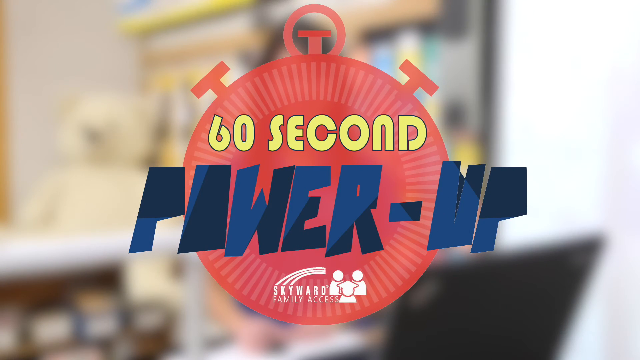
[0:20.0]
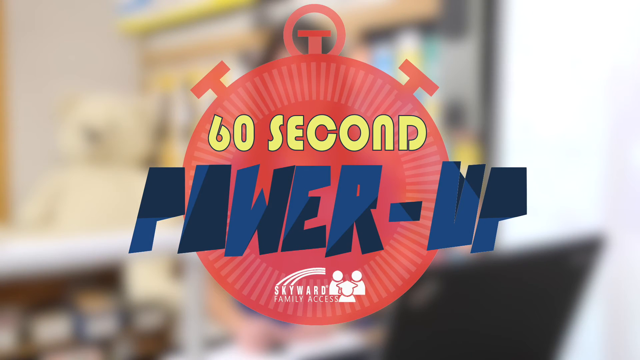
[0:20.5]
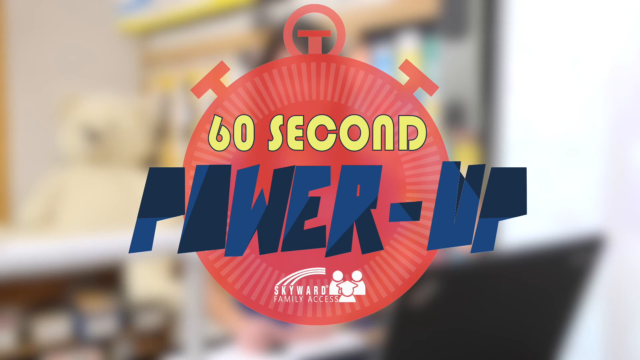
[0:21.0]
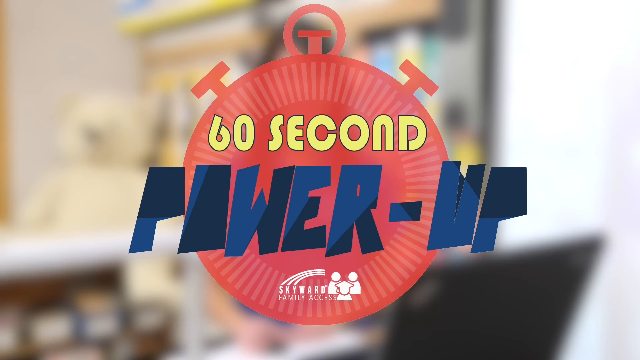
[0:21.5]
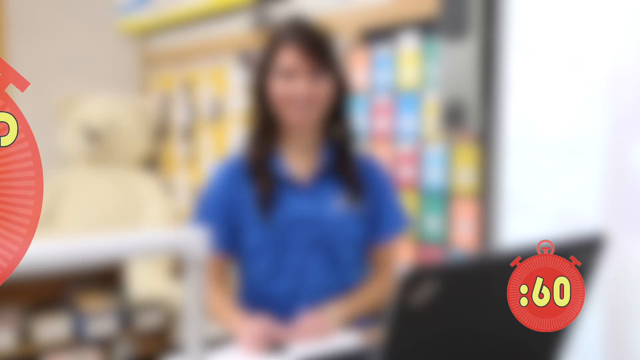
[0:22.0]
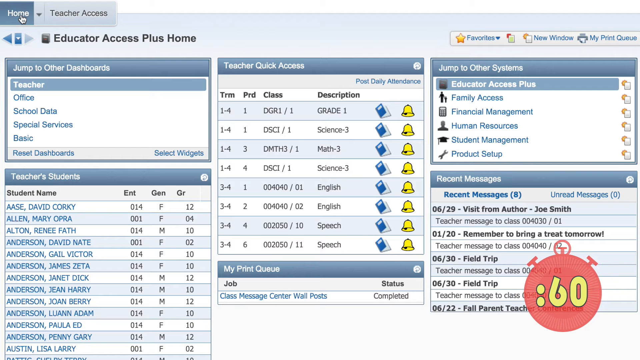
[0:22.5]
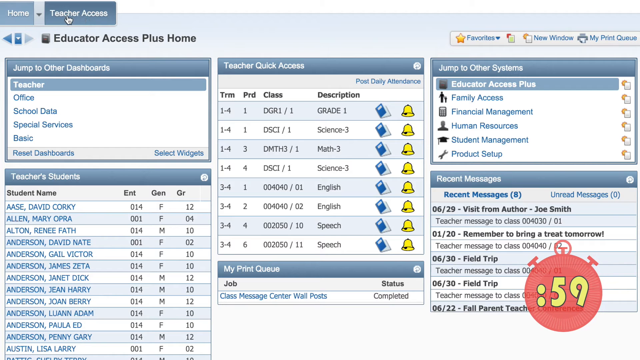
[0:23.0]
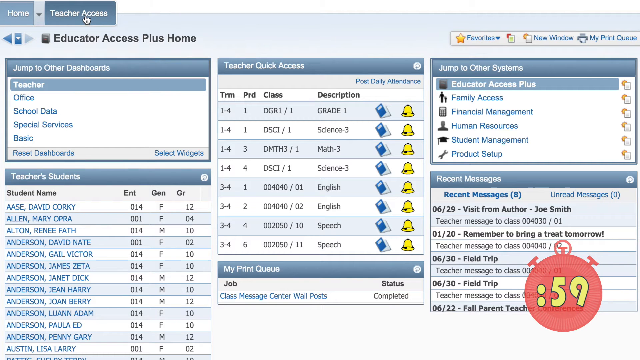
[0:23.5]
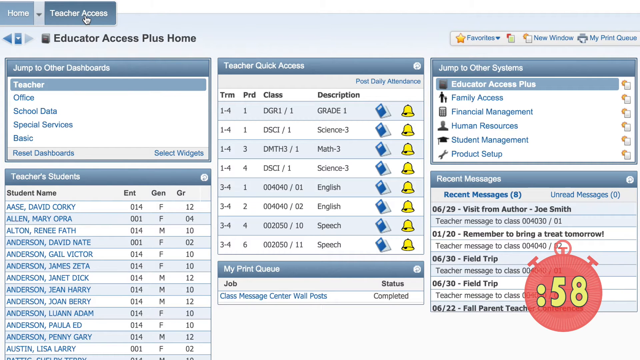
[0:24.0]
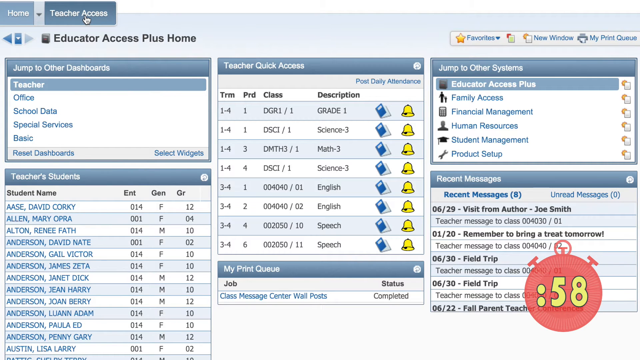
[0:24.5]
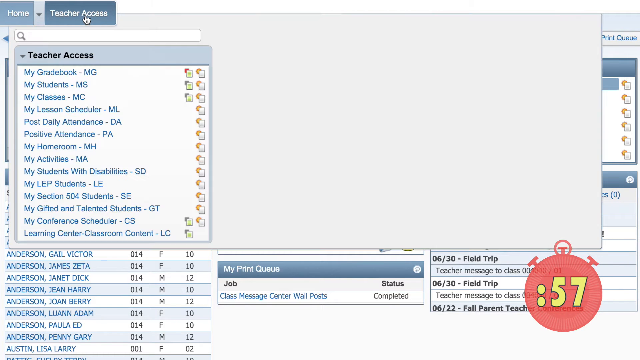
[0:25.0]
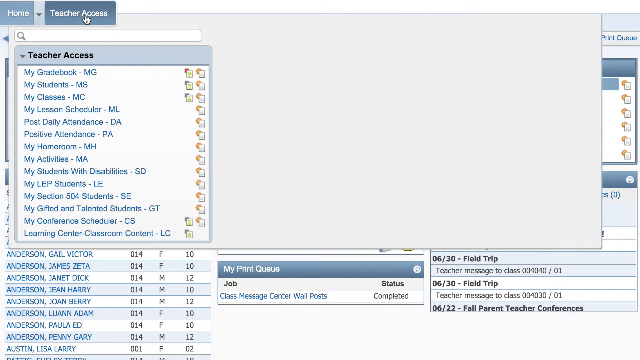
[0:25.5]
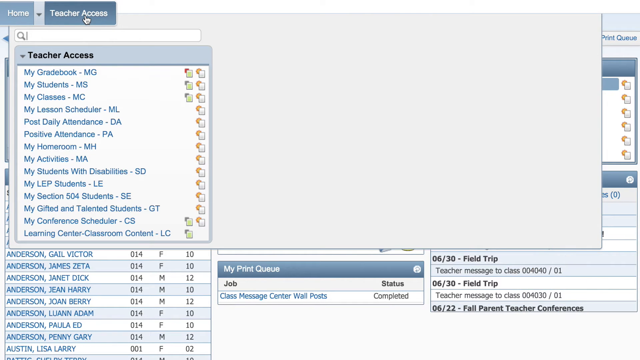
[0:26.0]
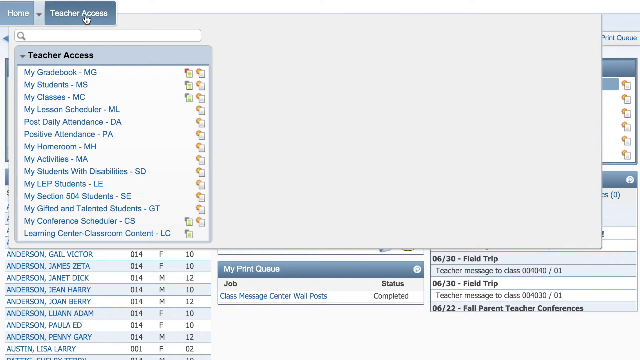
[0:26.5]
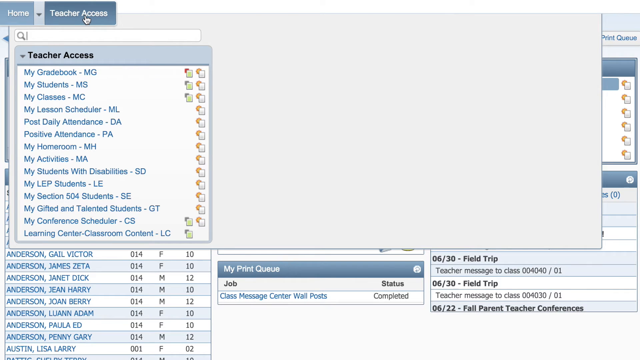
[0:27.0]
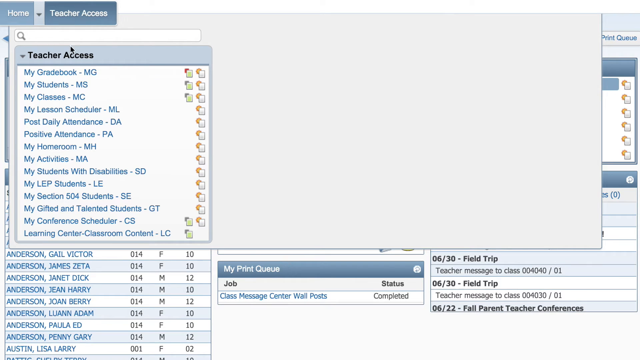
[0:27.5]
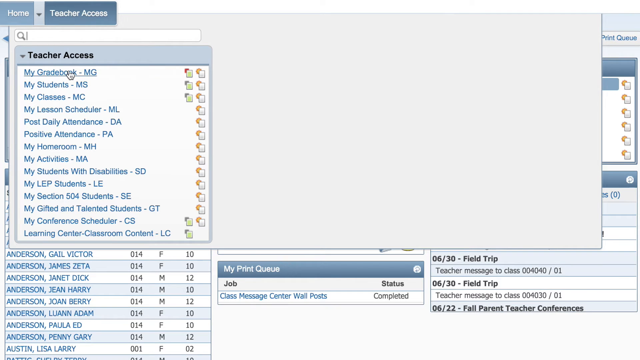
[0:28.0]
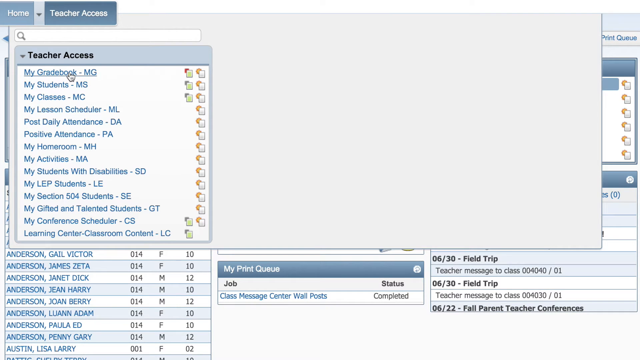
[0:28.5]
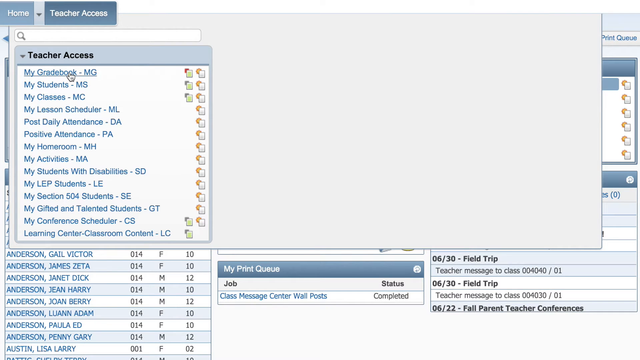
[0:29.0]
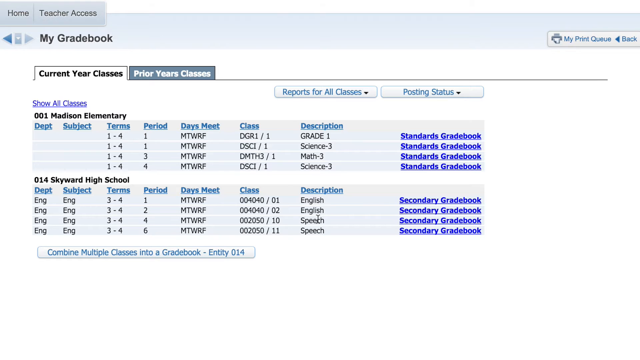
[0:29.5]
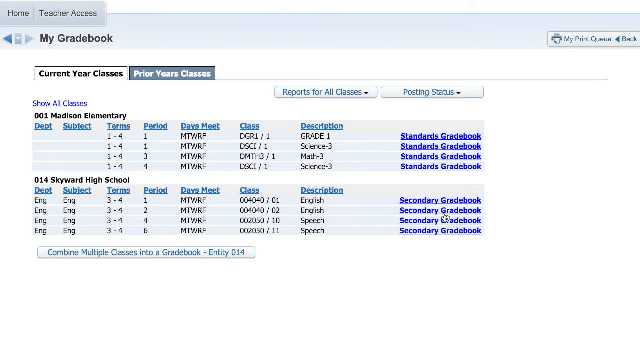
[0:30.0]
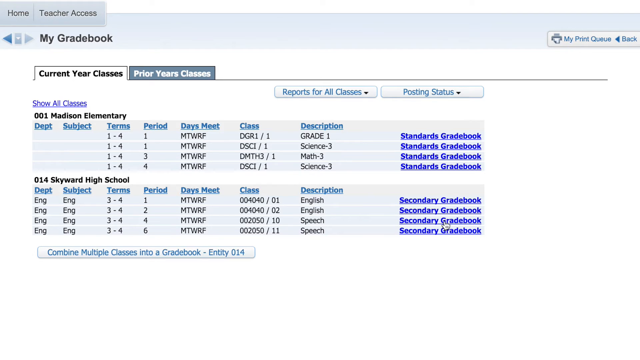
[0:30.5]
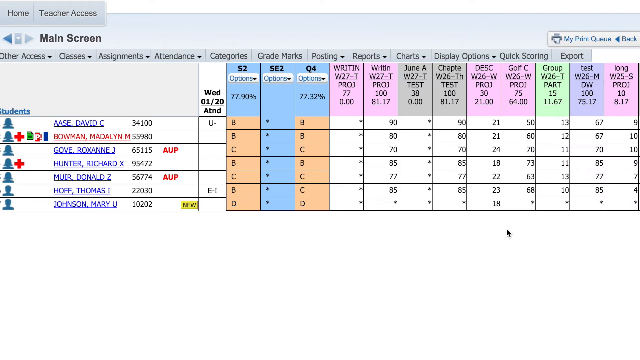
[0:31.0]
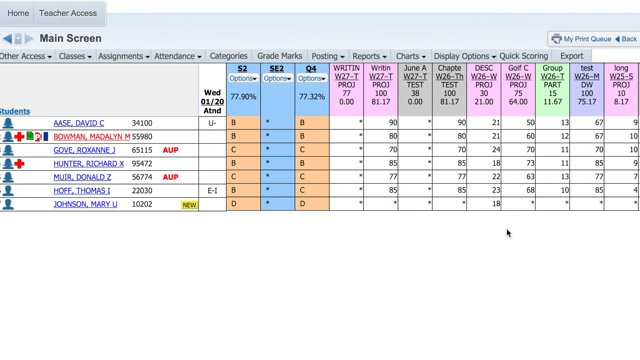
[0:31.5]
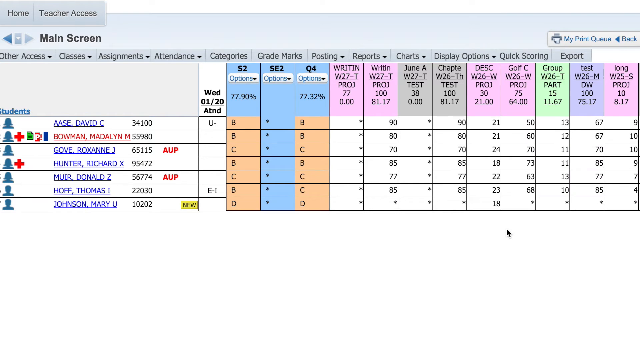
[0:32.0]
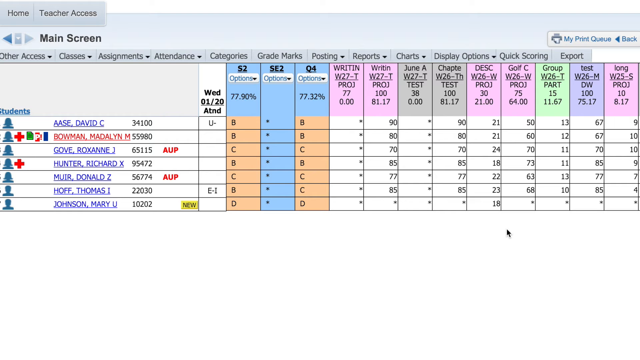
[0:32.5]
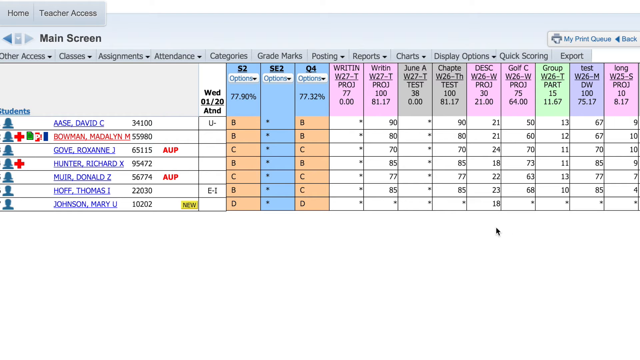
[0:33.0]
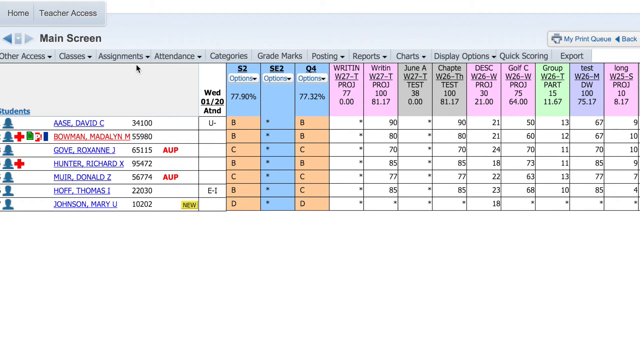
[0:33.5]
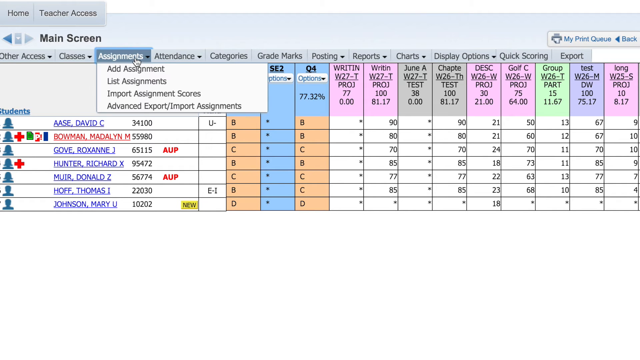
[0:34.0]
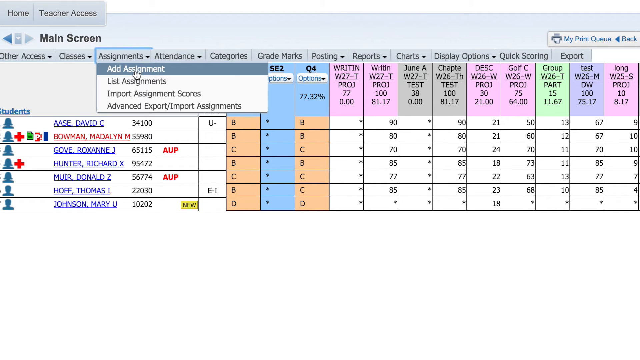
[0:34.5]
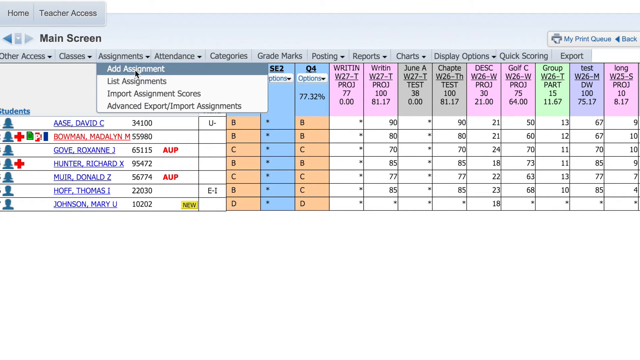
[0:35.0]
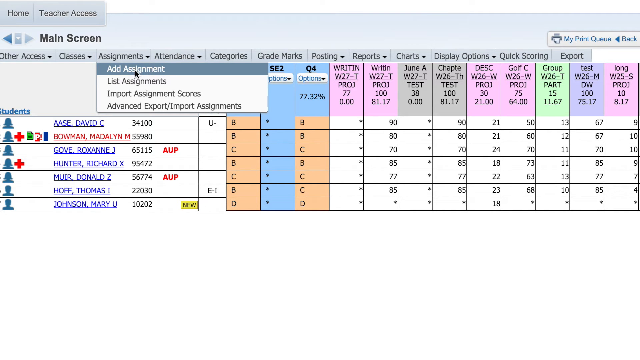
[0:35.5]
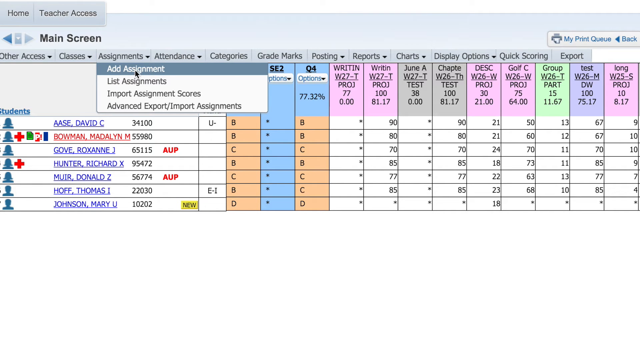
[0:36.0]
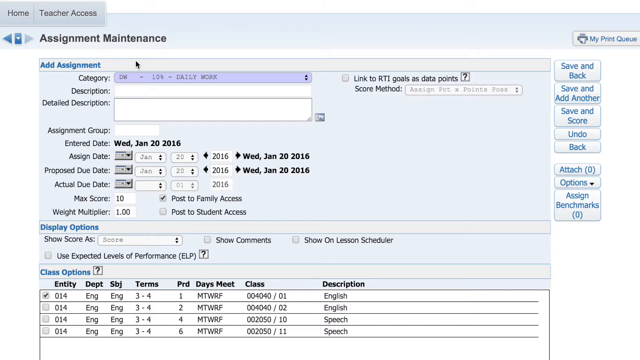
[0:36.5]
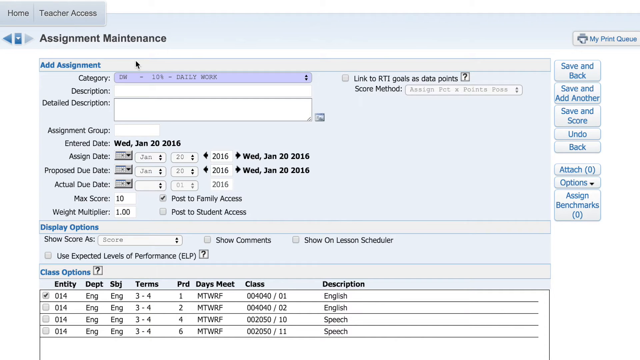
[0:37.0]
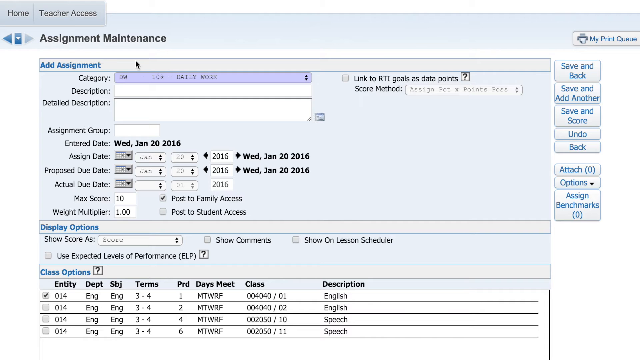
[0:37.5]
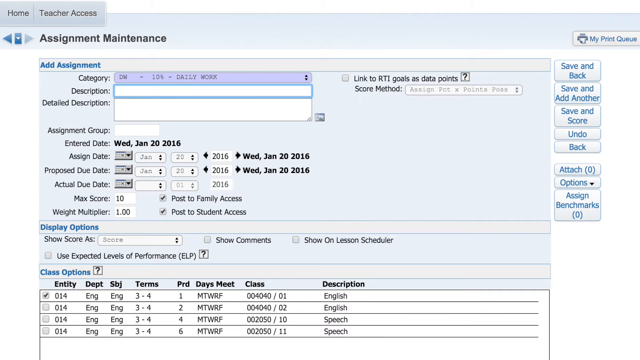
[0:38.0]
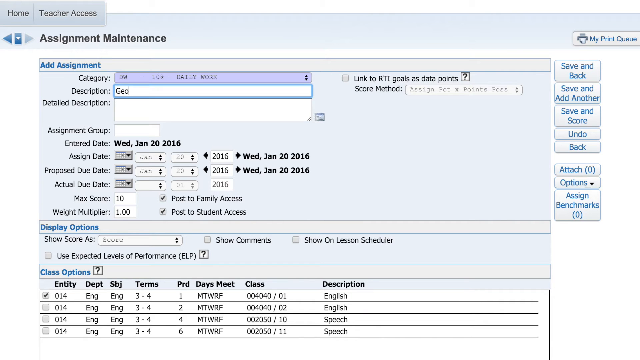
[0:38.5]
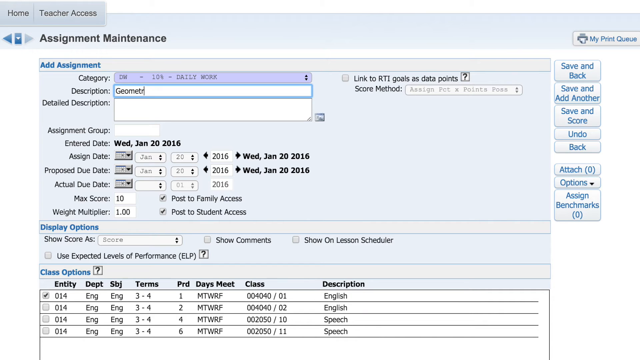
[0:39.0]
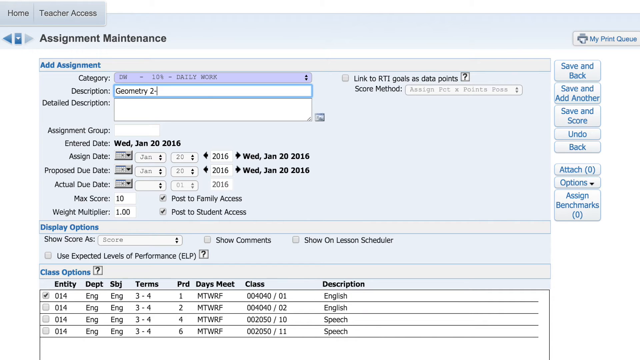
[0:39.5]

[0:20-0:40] The timer moves to the bottom right of the screen at a smaller size, with the number 60 in it, and starts counting down the seconds from 60 to 0. Within the first few seconds, a recording shows a platform being used, with a lot of information on screen. It has a light blue background, and the windows are a slightly darker blue for contrast. Many words related to a school are visible. The title of the section says "Educator access plus home", and there are options such as "Teacher", "Office", "School data", "Special services" and "Basic". Some descriptions contain words like "Grade 1", "Math" and "Science". The user opens a menu with plenty of options and clicks one, which opens what appears to be a schedule for events or classes.